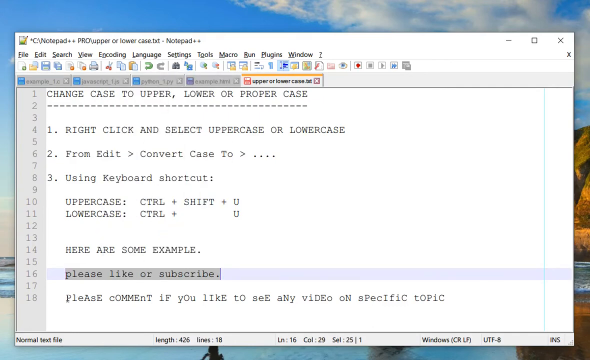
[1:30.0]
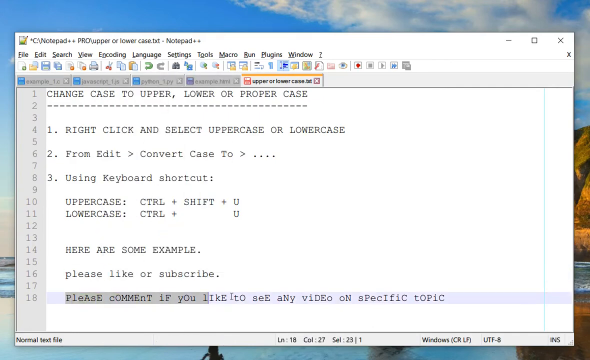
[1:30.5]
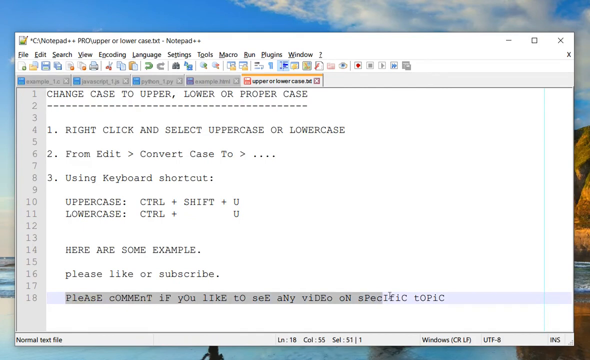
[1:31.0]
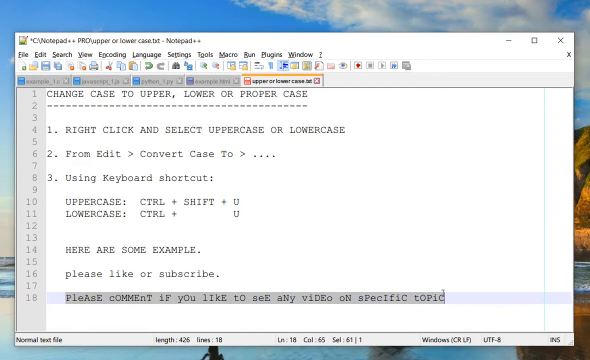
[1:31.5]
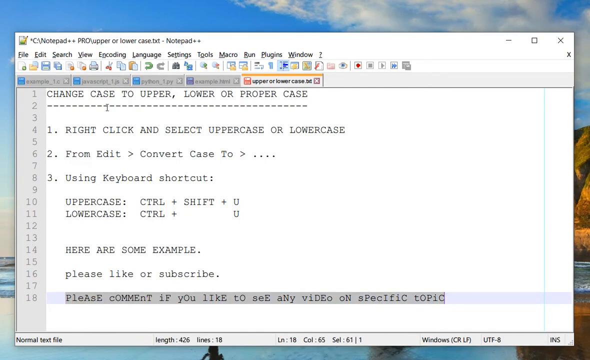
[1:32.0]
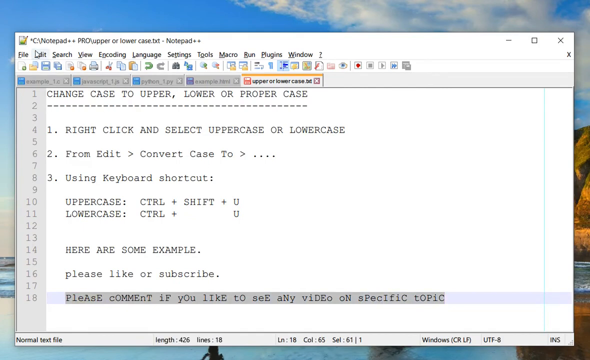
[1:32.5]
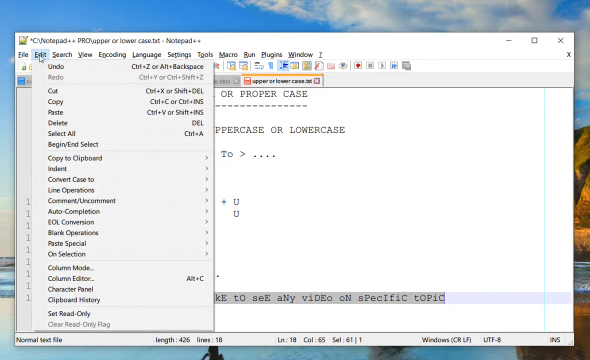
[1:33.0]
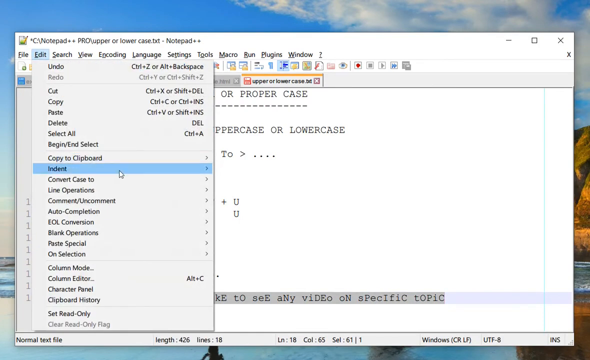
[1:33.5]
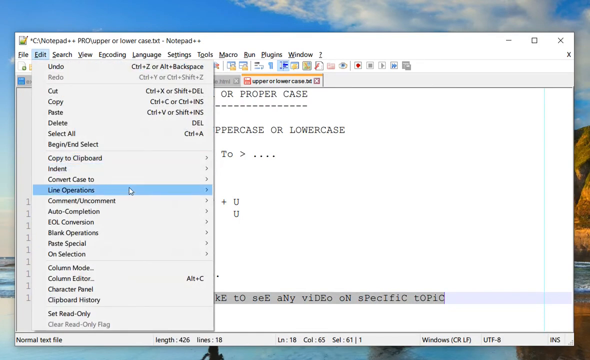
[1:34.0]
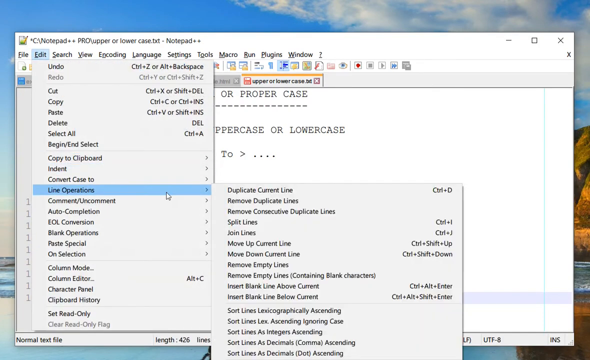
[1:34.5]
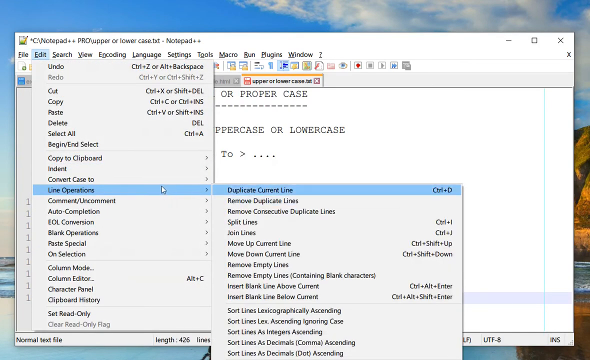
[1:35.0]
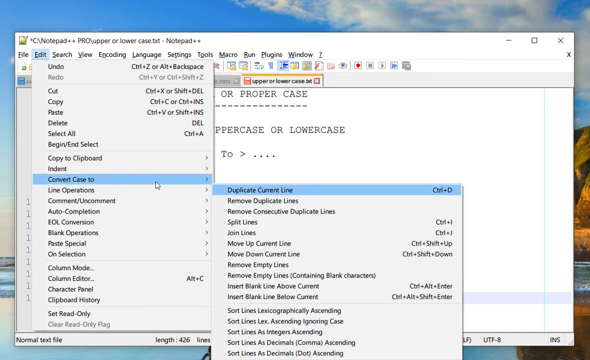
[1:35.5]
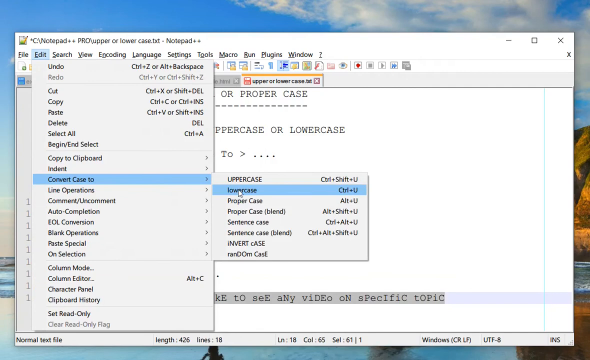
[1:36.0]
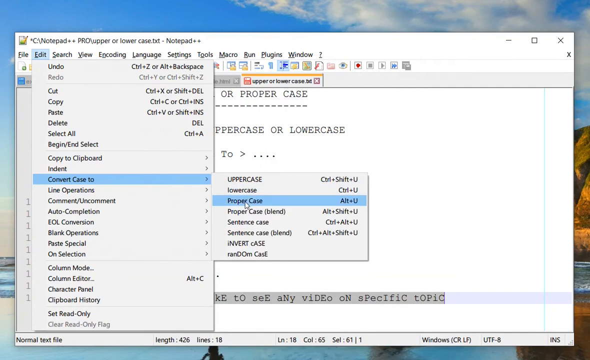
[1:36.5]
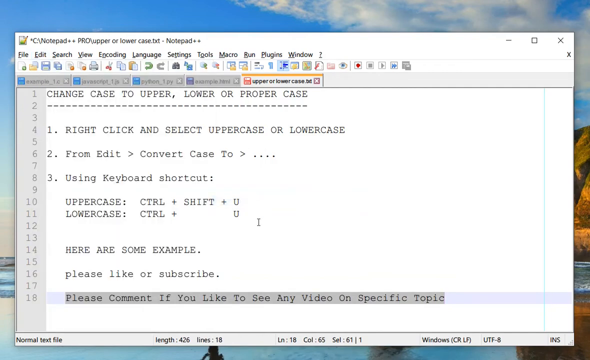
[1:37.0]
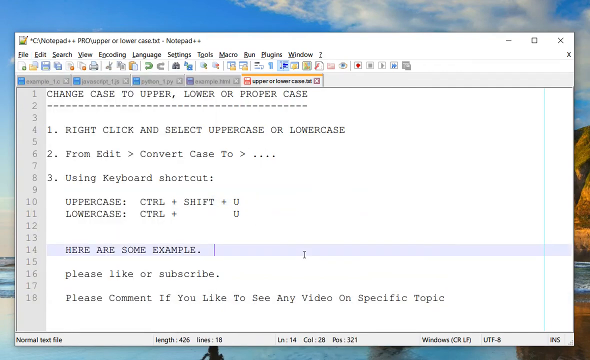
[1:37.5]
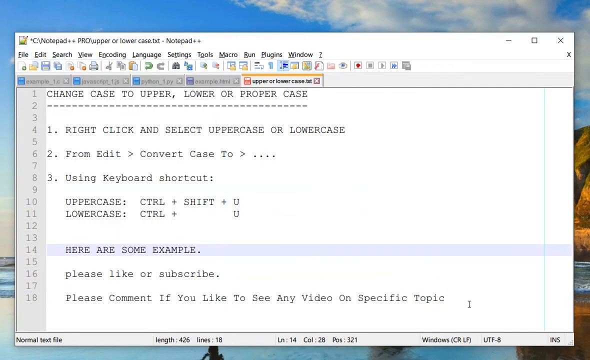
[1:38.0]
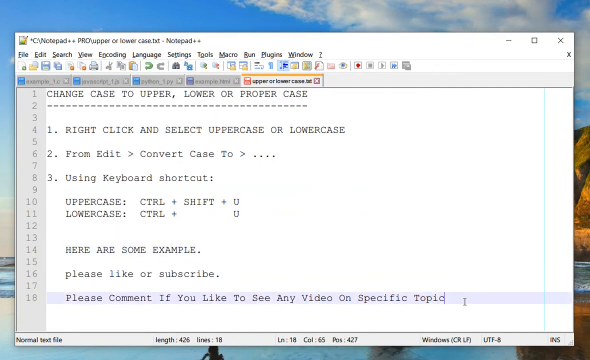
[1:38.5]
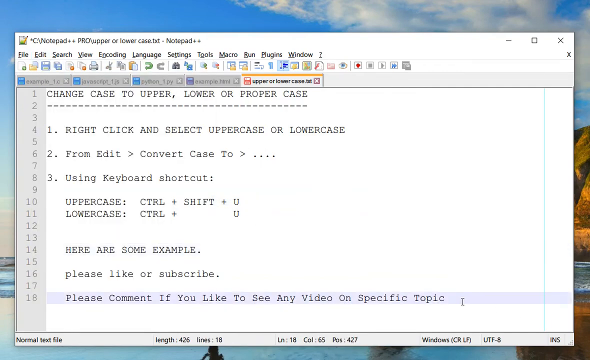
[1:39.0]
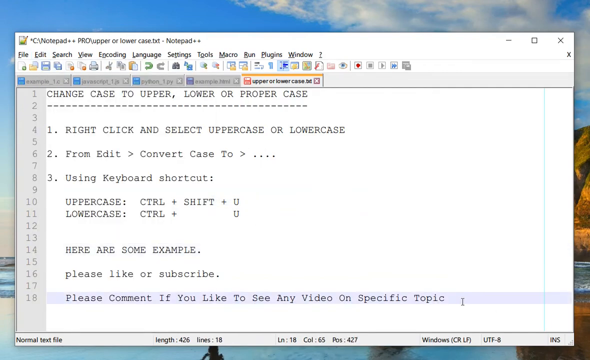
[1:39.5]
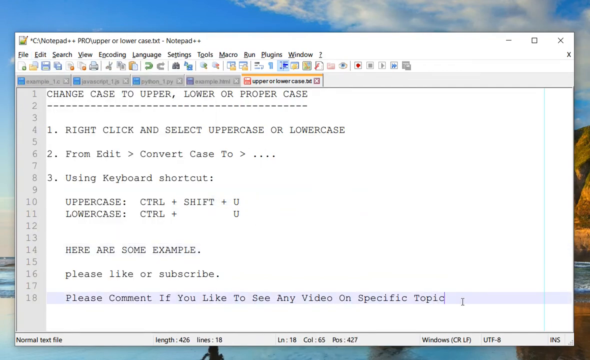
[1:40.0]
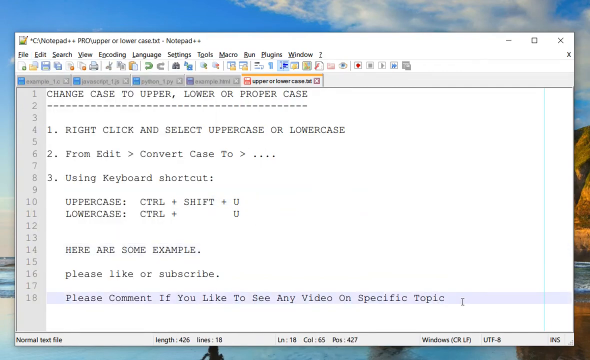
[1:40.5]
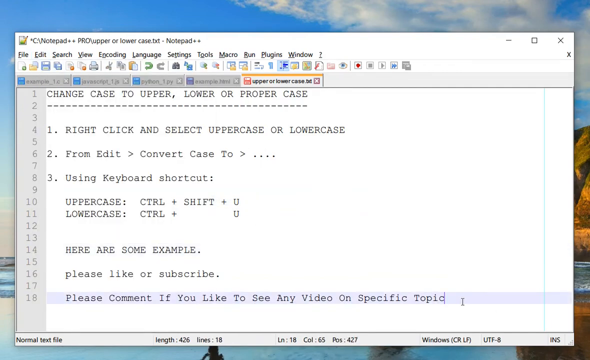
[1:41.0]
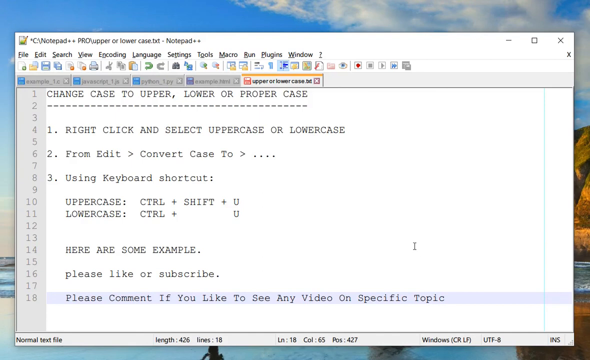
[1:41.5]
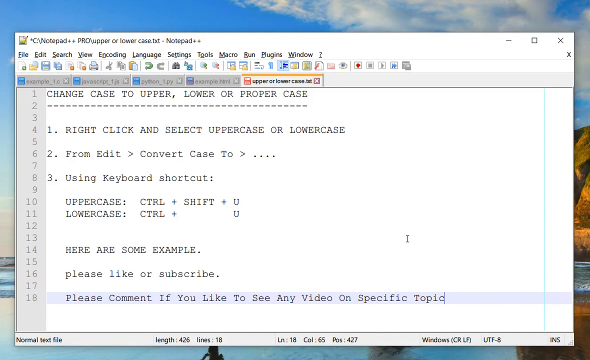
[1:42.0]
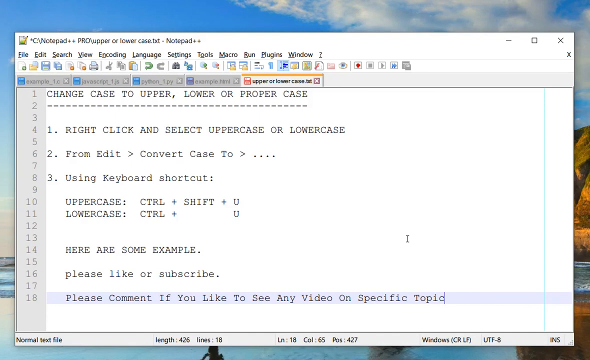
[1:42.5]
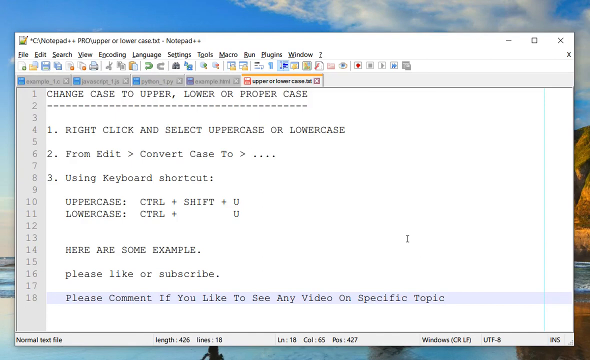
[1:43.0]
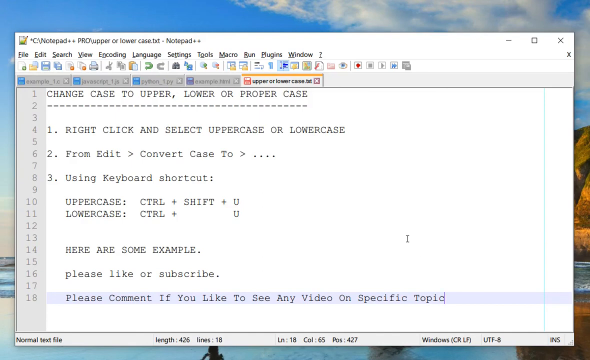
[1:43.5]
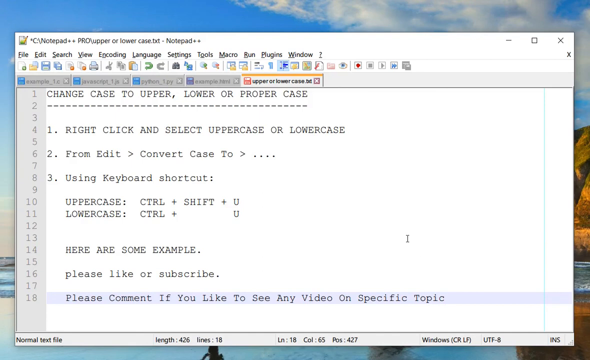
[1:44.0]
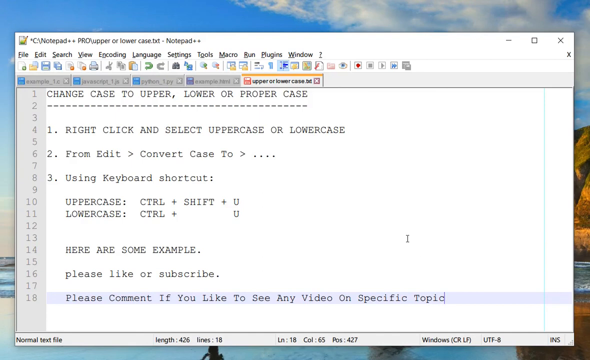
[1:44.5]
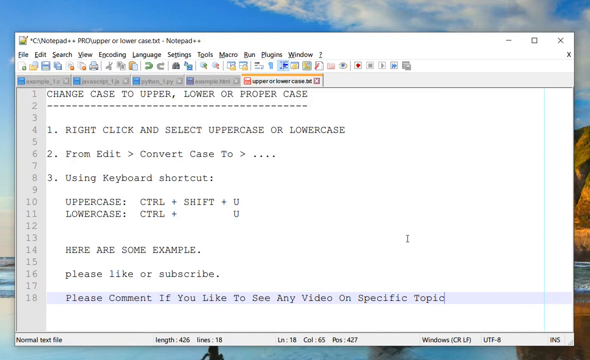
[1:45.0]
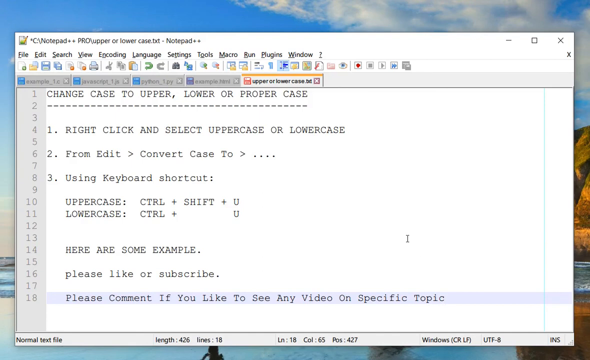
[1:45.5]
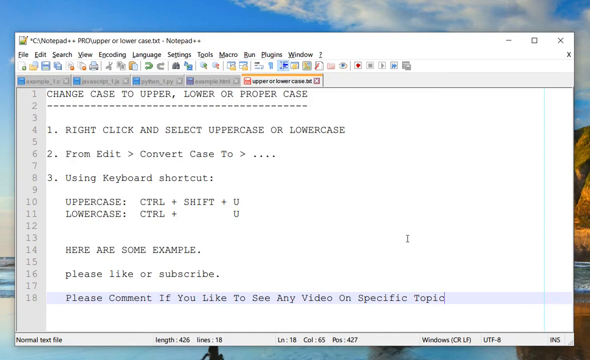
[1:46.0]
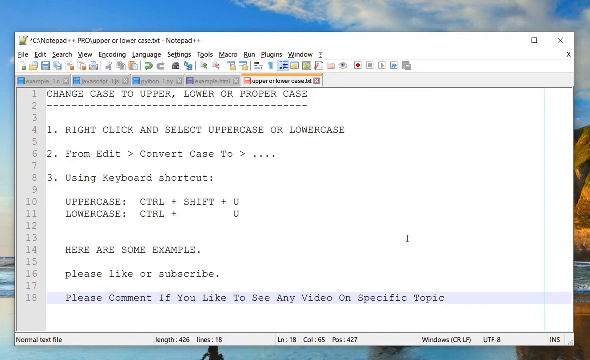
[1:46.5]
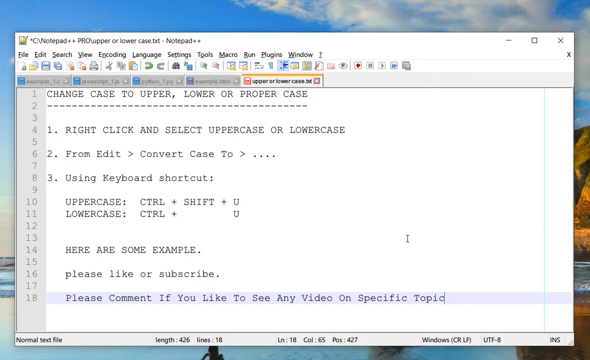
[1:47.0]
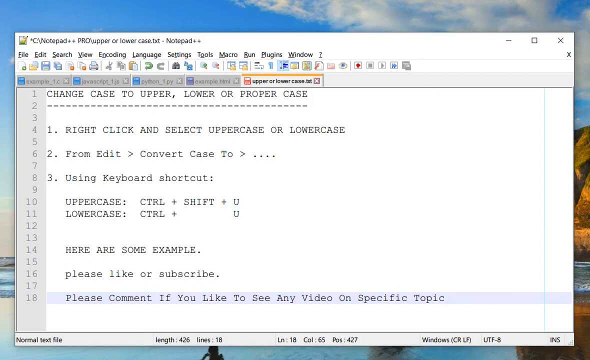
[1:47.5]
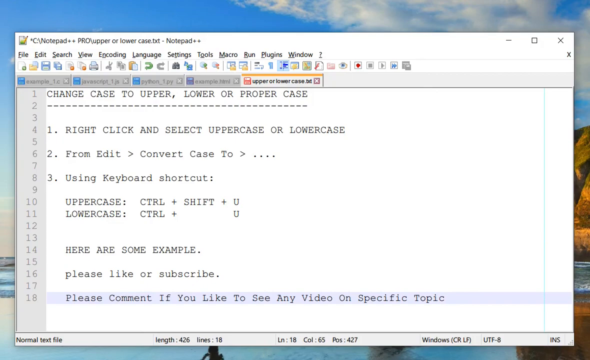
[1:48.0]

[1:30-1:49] The user continues working with the examples in Notepad++, highlighting "please comment if you like. If you see any video on a specific topic", which has some spelling or context problems. The user sets proper case on that text, which capitalizes the first word of each sentence. The user then goes back down and moves the mouse around a little, staying there until the video ends. The website has been closed, and the desktop background is visible: it looks like a beach setting with possibly some hills or mountains to the right, a clear blue sky, and some cloud cover.